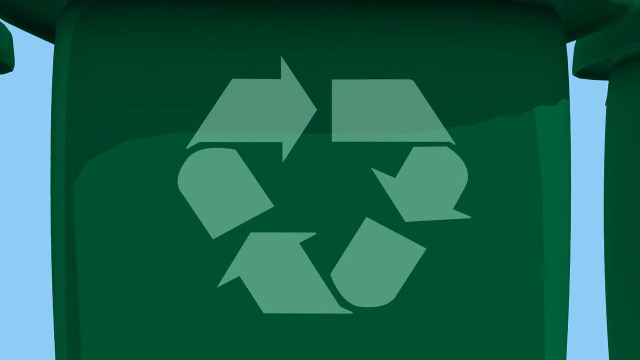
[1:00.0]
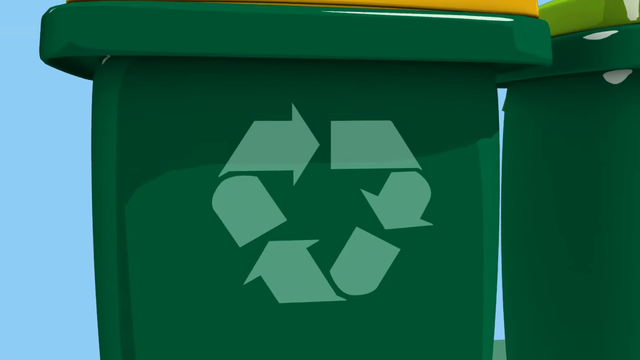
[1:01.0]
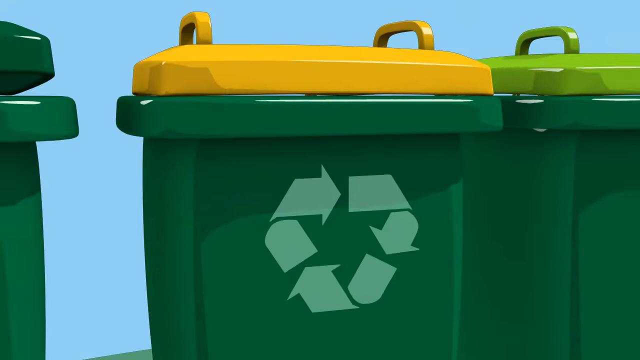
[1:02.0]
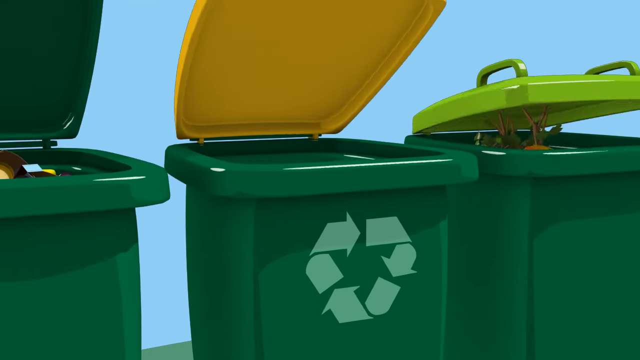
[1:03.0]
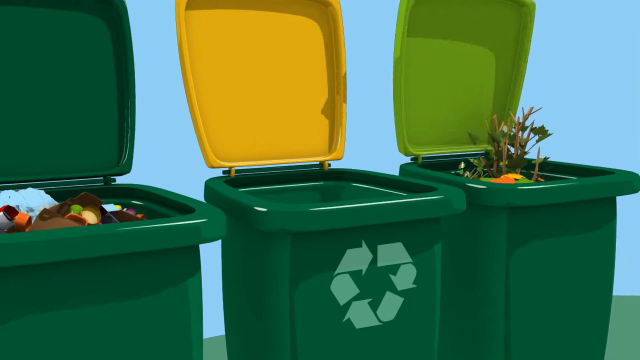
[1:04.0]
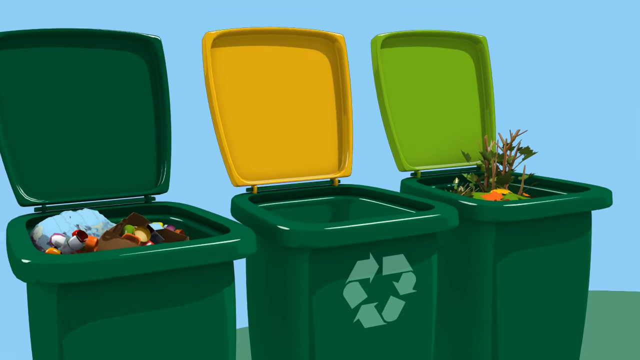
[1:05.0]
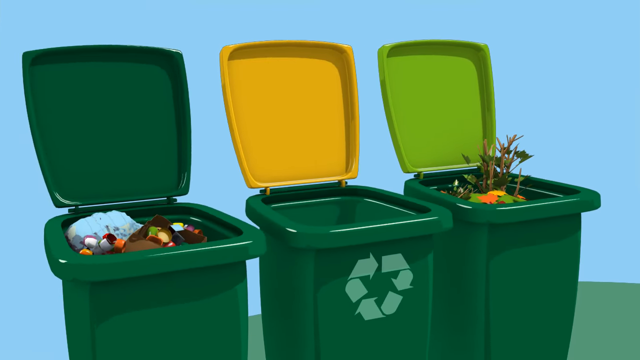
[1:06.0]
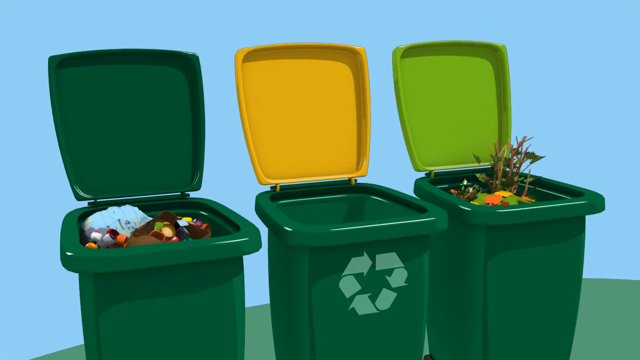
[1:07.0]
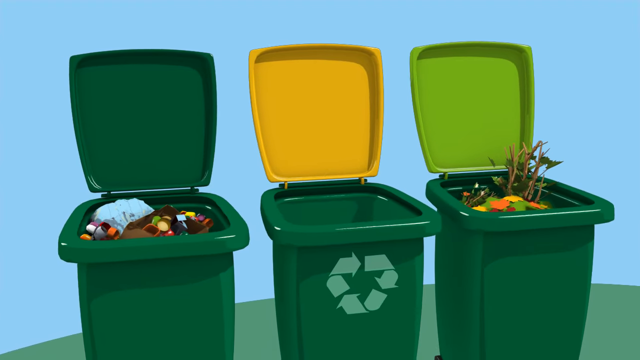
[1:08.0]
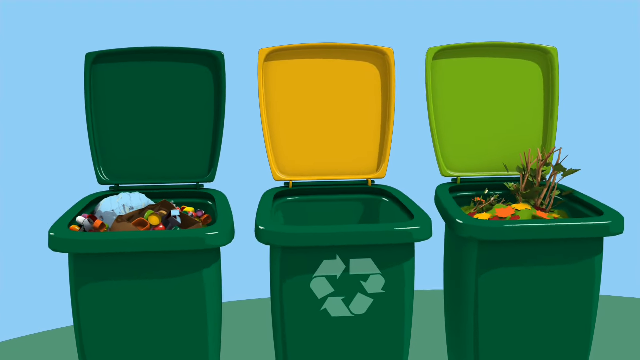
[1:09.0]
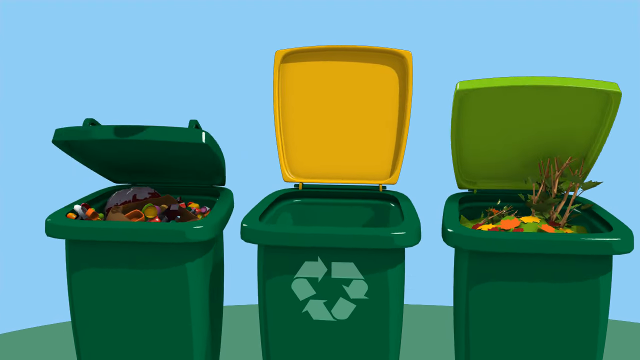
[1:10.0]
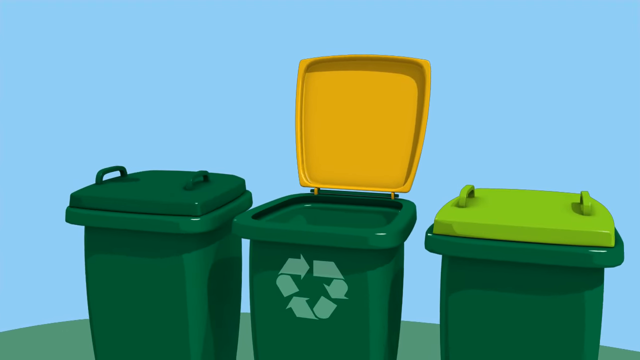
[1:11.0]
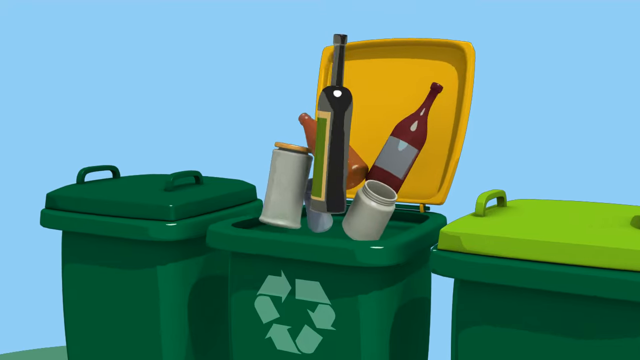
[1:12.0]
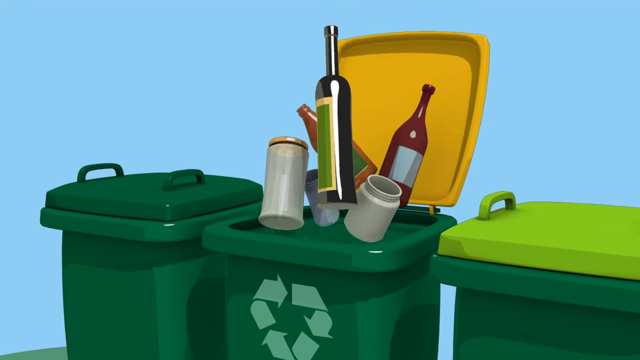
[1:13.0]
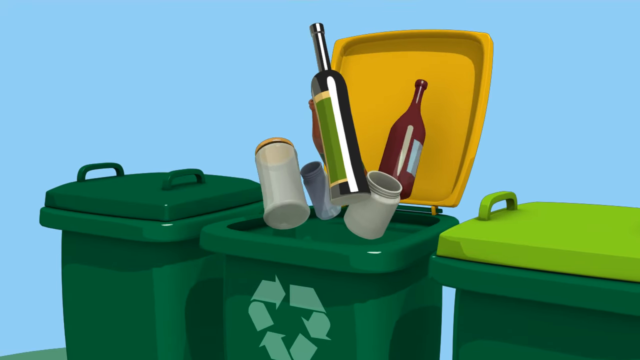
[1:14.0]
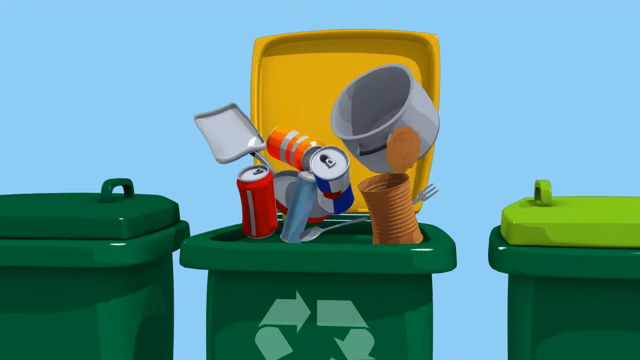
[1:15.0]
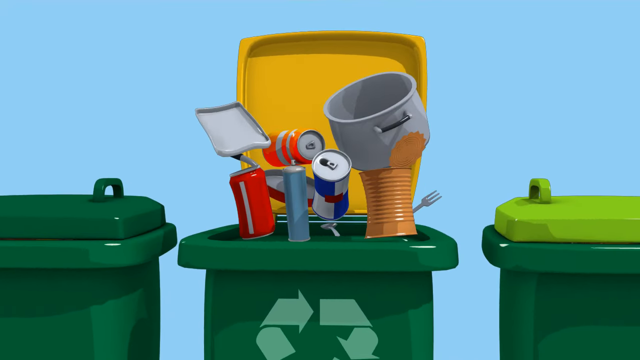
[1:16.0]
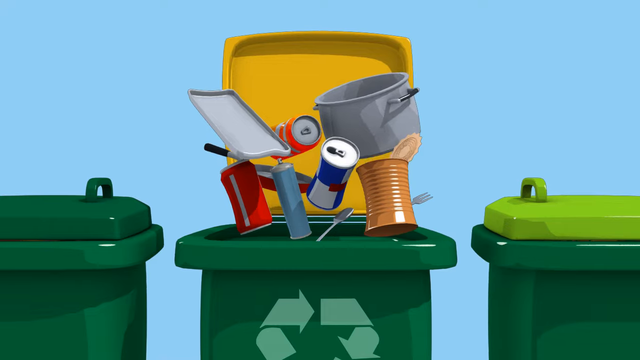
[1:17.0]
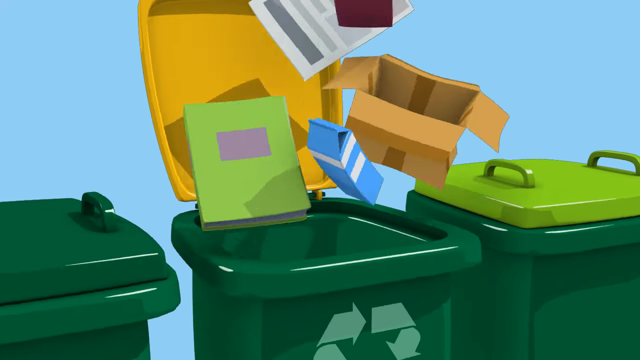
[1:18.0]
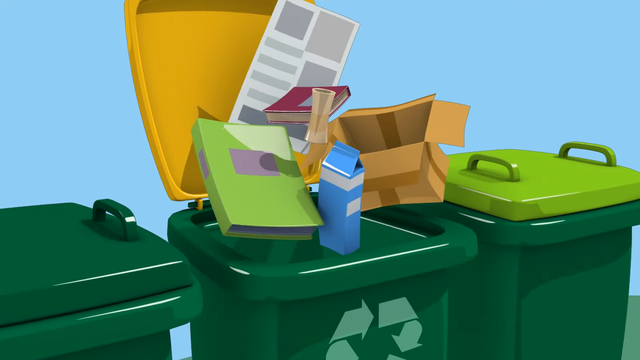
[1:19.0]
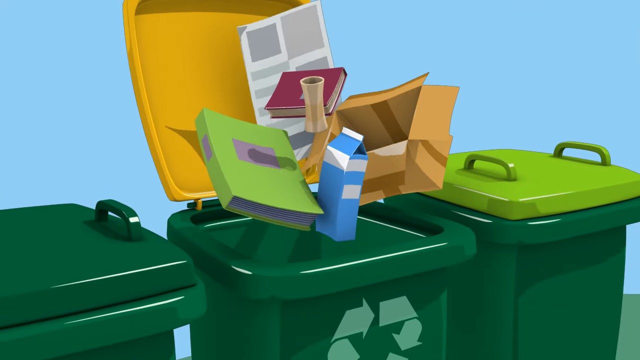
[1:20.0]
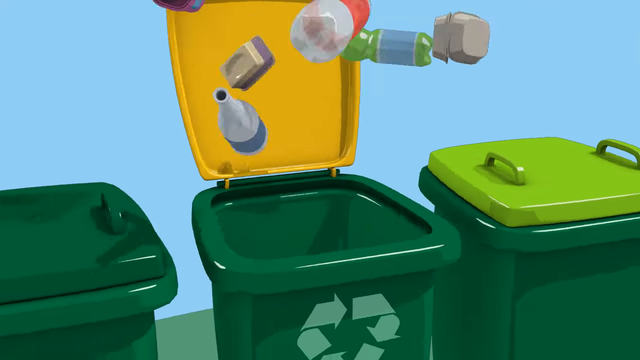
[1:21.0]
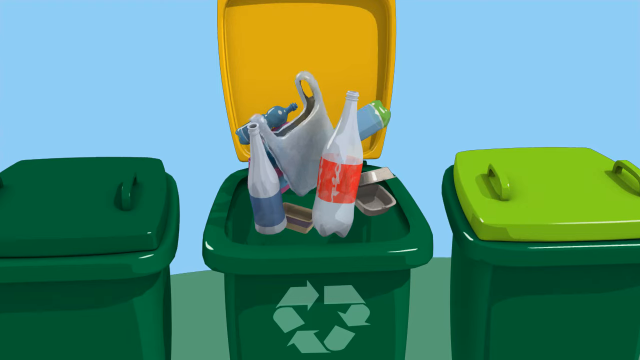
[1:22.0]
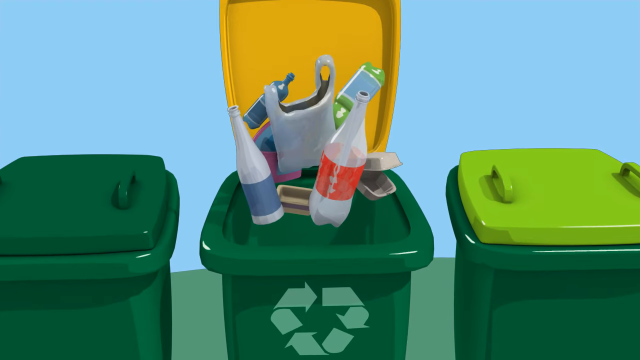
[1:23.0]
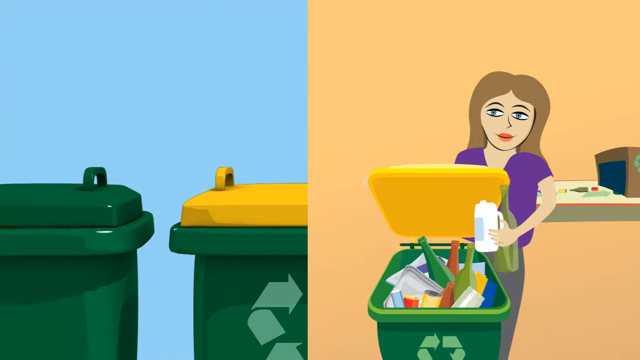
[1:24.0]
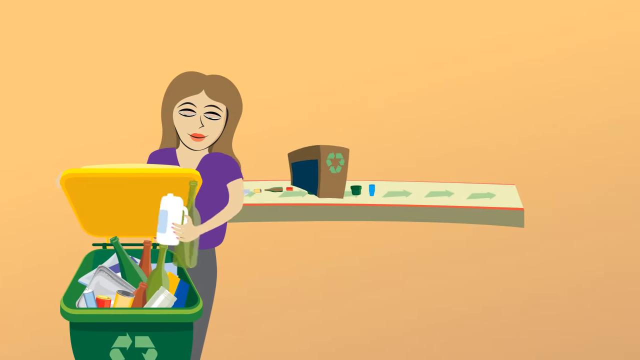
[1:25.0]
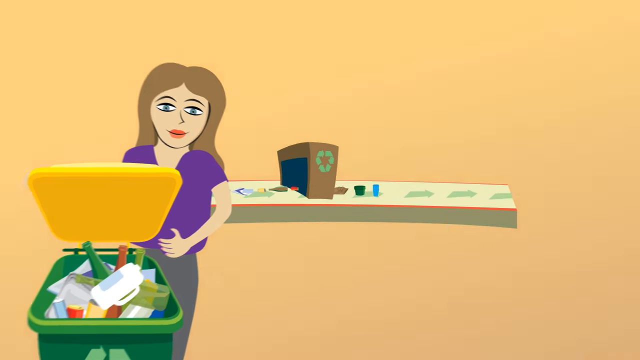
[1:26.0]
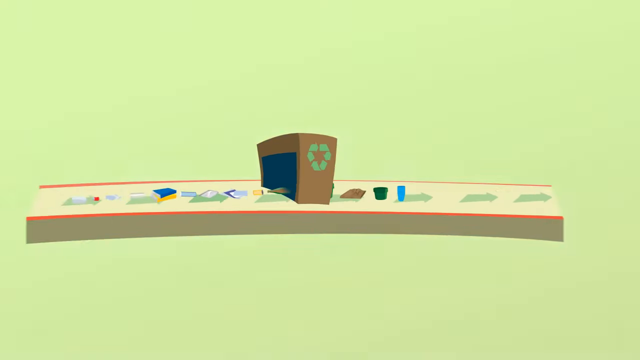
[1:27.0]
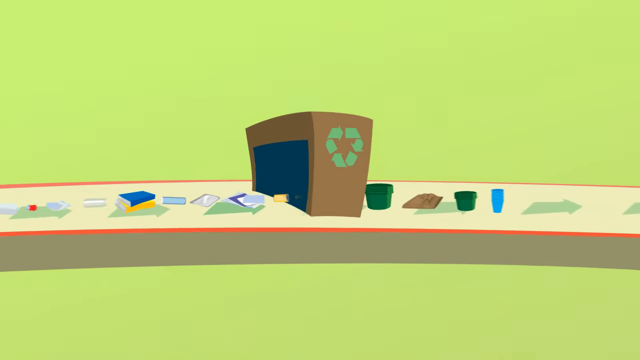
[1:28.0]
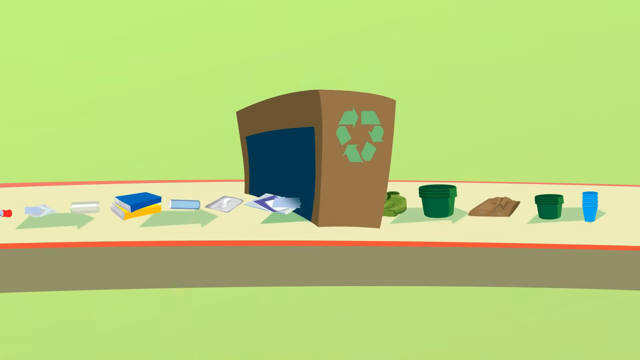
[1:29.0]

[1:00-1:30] A very zoomed-in image shows a green lid with a lighter recycling logo of three arrows. As the view zooms out, it turns out to be the middle container with the yellow lid. Next, the three containers stand right next to each other and each lid opens in turn: the dark green, the yellow, and then the light green, and the view kind of shows inside them. The lighter green bin looks like it holds compost, the darker green one looks like it holds trash, and the middle bin with the yellow lid holds recycling. The lids on the side bins close, and then the different types of recycling that can go into the middle bin are shown: metal, glass, paper products, and plastic.